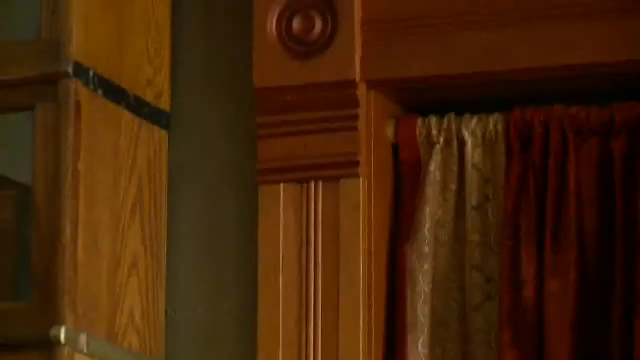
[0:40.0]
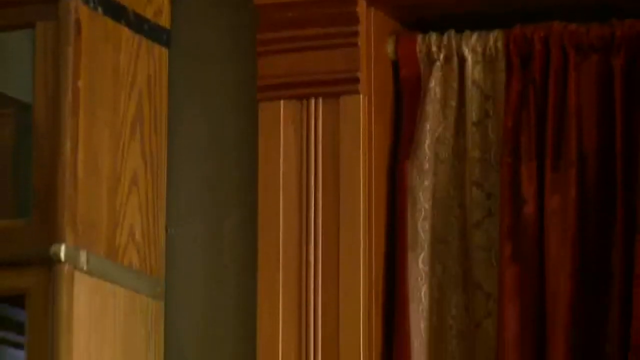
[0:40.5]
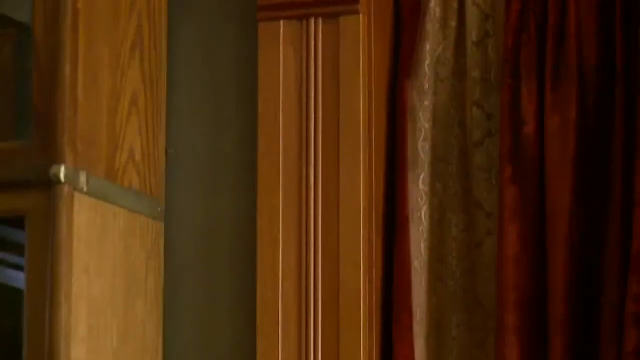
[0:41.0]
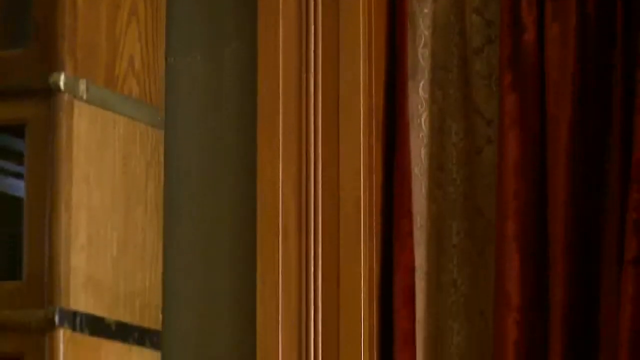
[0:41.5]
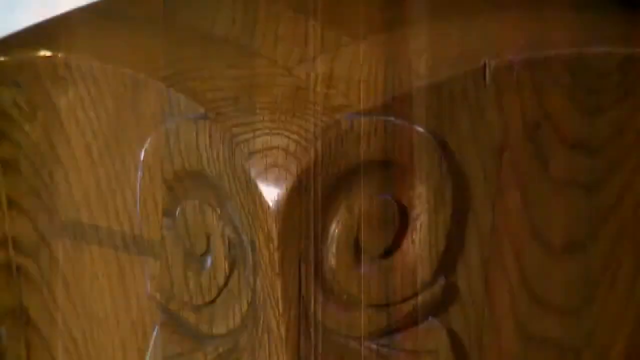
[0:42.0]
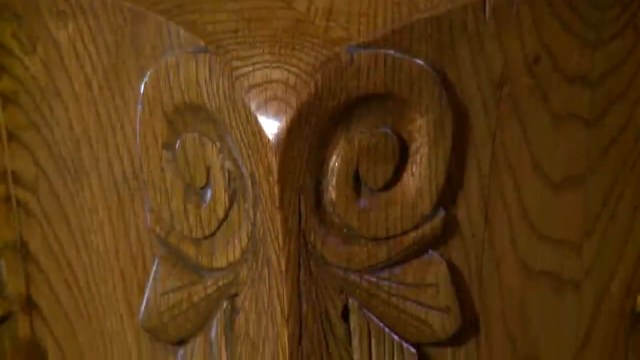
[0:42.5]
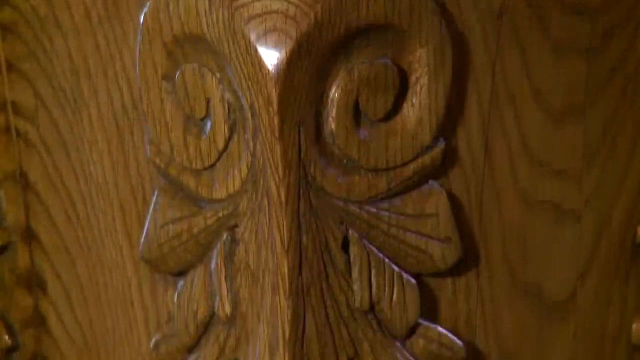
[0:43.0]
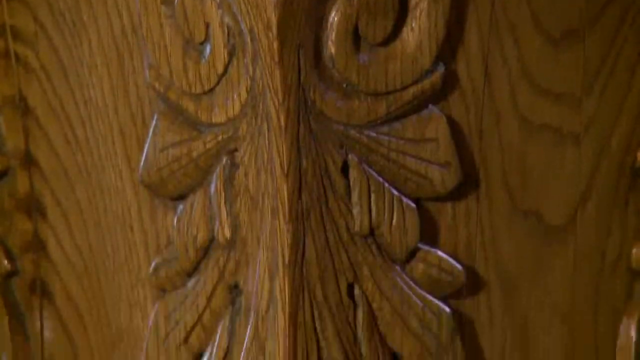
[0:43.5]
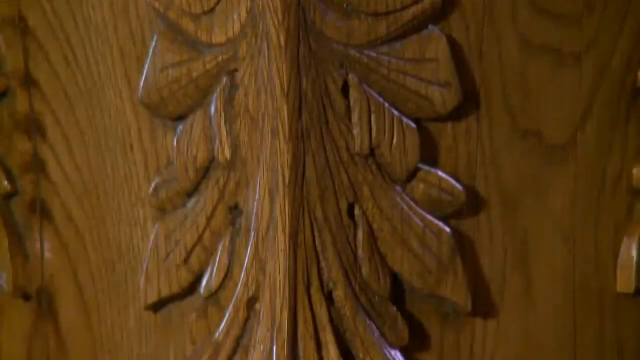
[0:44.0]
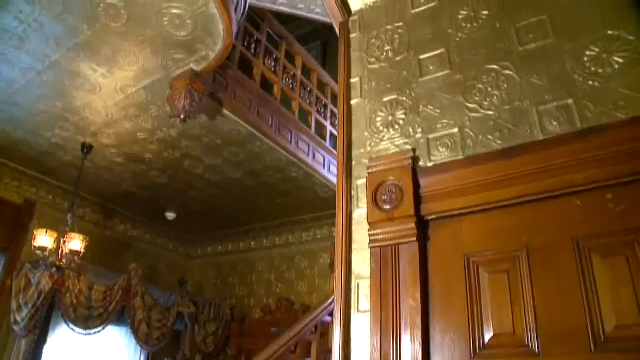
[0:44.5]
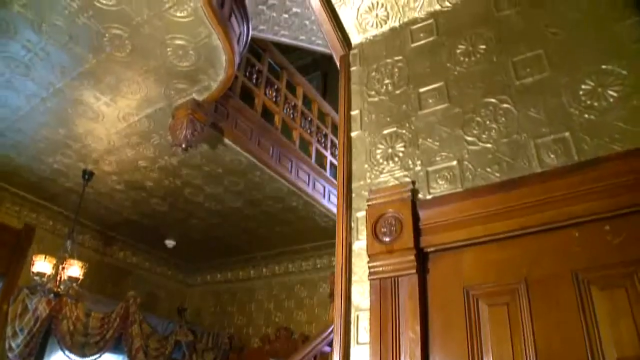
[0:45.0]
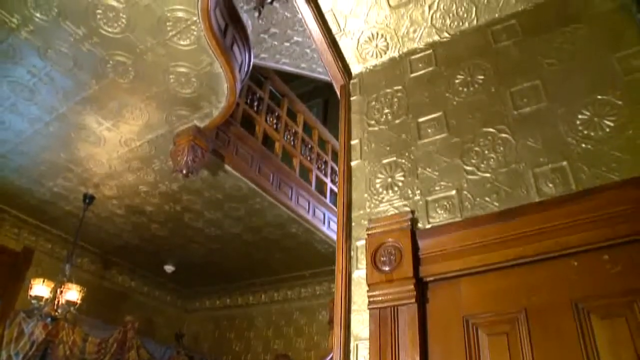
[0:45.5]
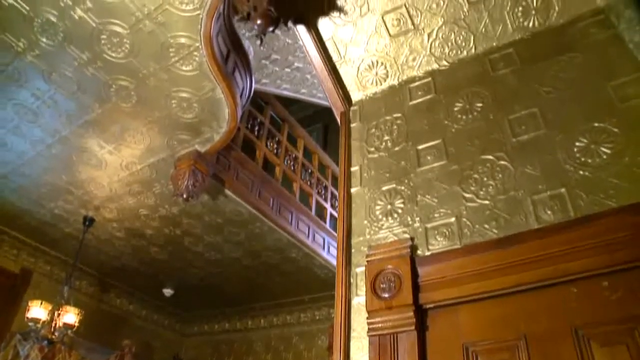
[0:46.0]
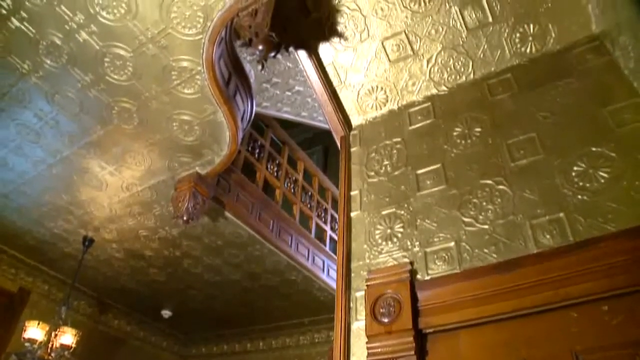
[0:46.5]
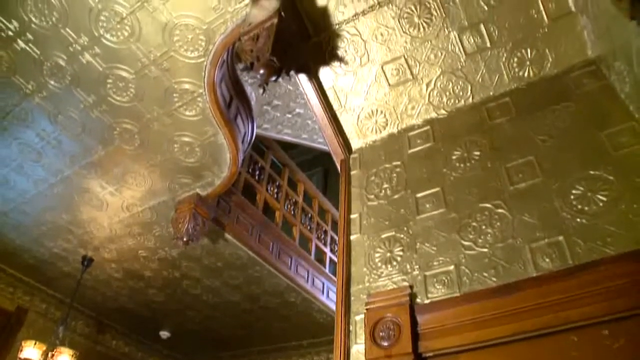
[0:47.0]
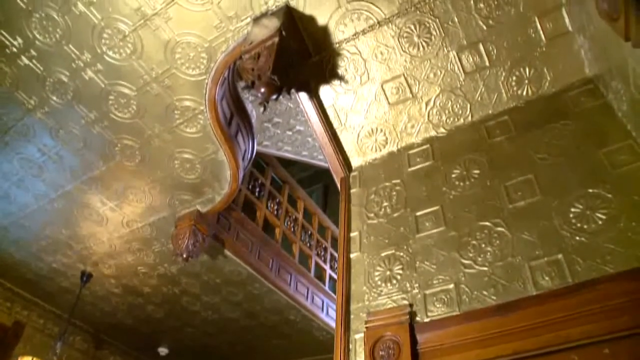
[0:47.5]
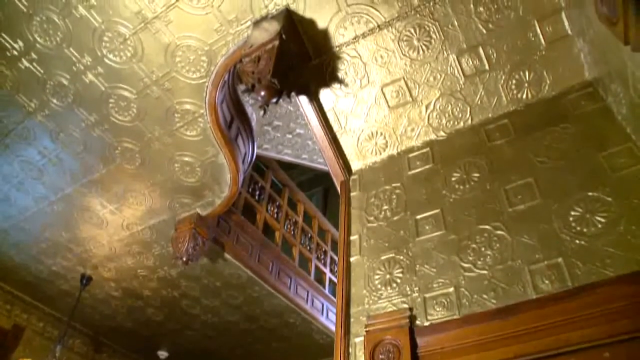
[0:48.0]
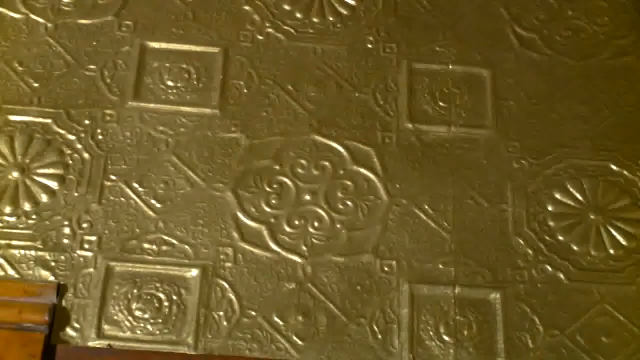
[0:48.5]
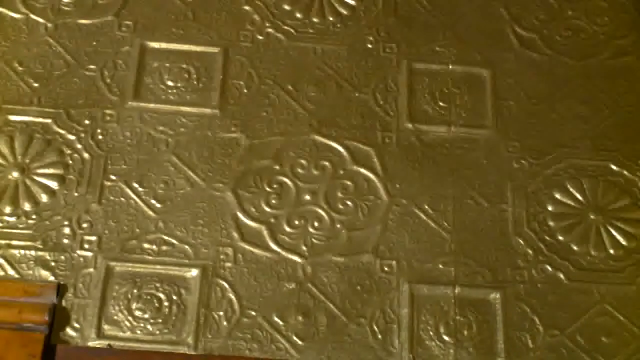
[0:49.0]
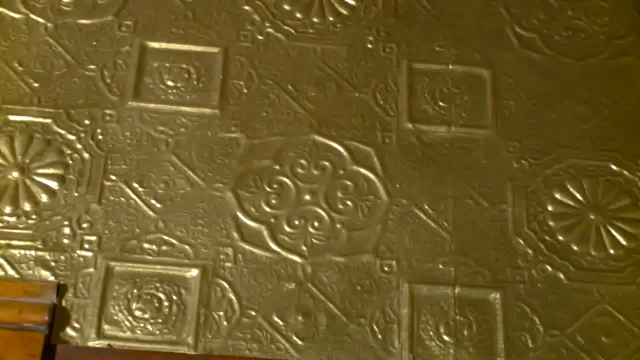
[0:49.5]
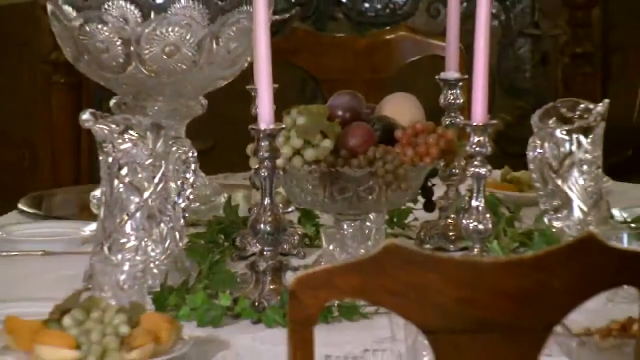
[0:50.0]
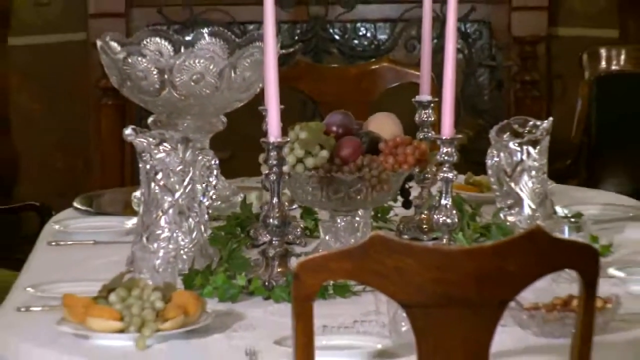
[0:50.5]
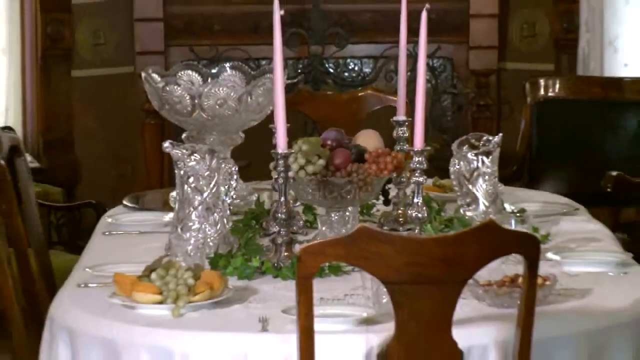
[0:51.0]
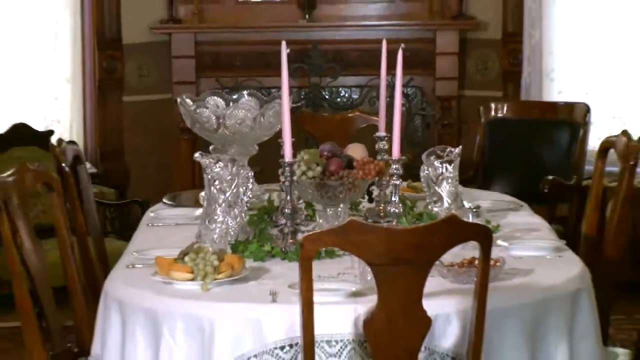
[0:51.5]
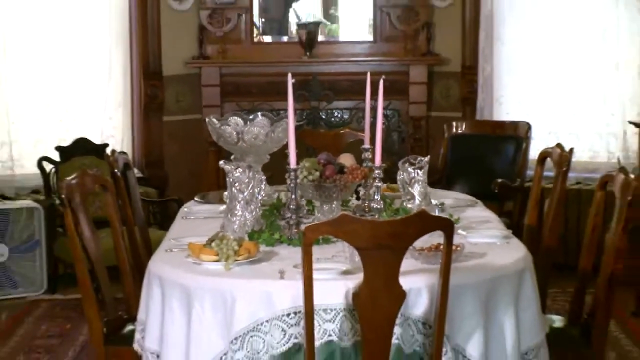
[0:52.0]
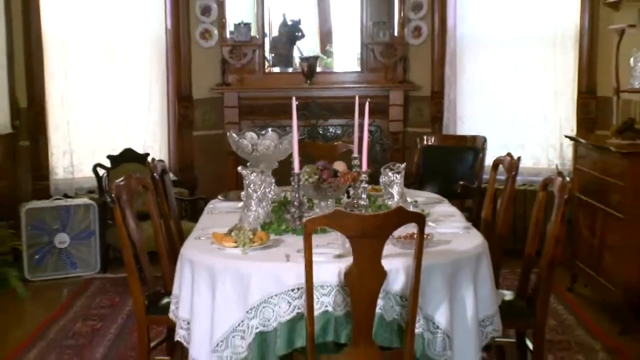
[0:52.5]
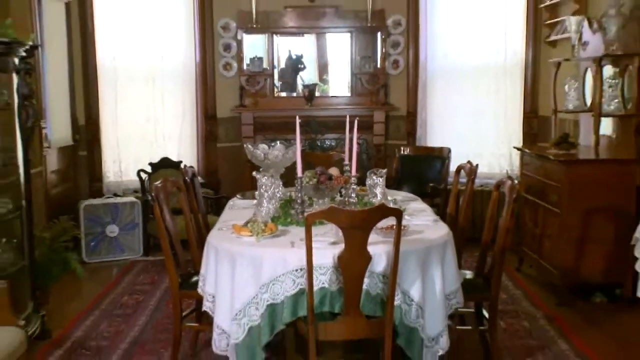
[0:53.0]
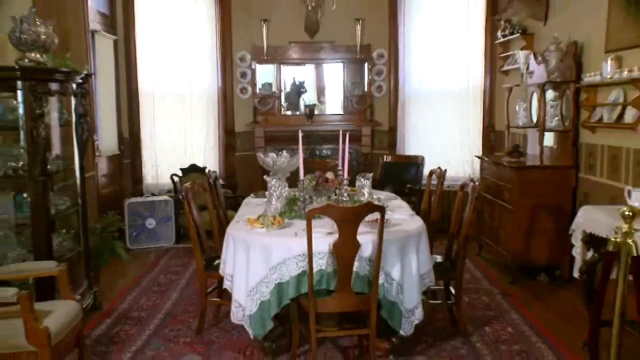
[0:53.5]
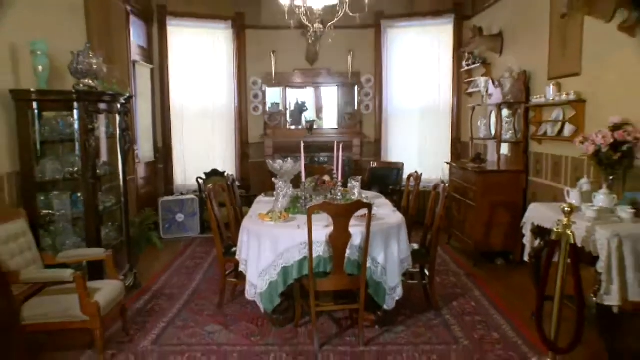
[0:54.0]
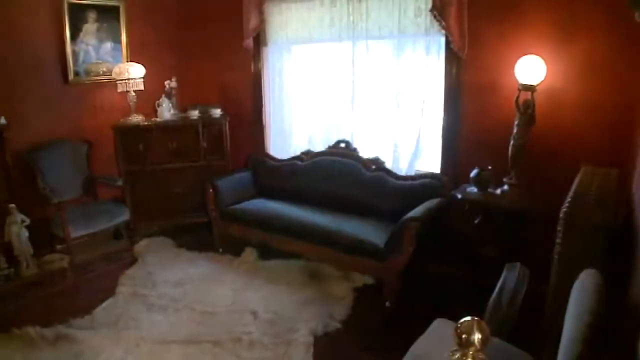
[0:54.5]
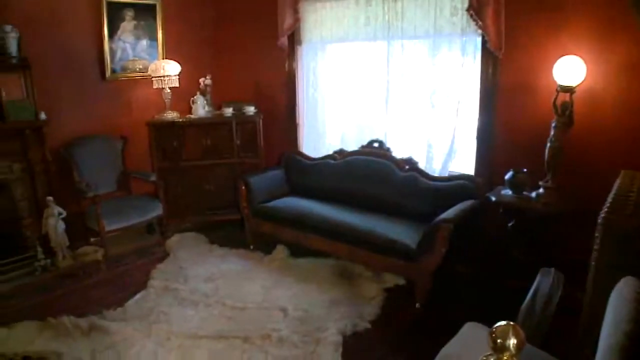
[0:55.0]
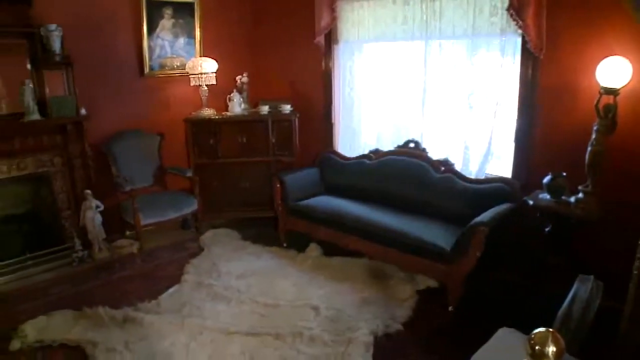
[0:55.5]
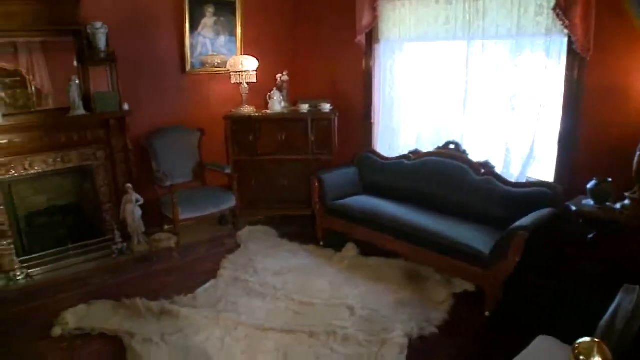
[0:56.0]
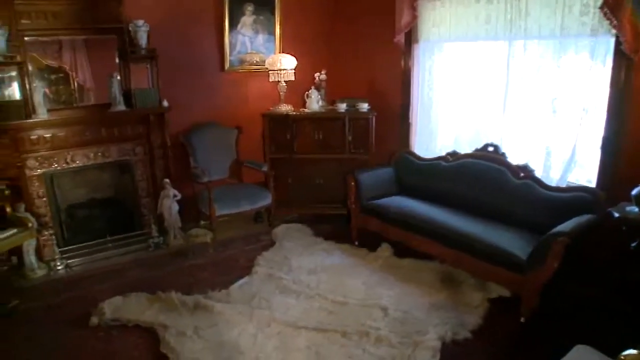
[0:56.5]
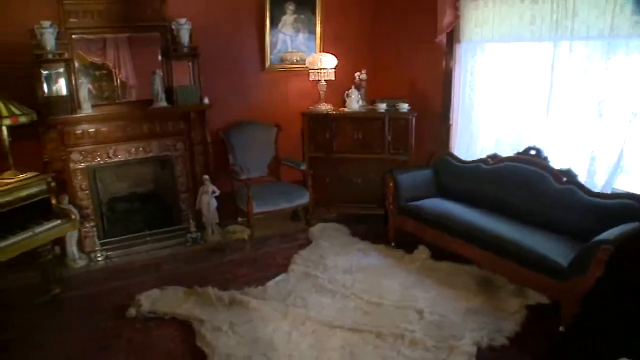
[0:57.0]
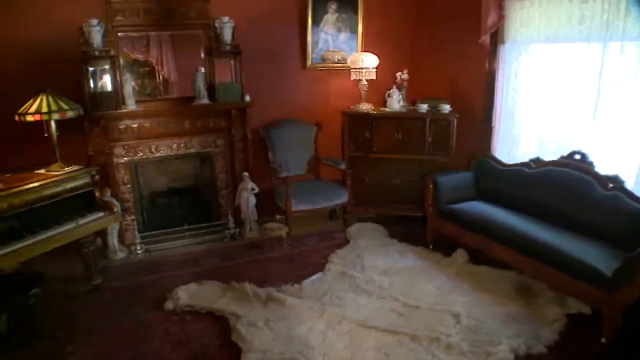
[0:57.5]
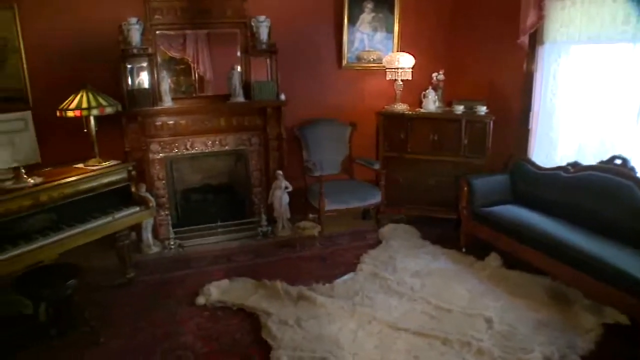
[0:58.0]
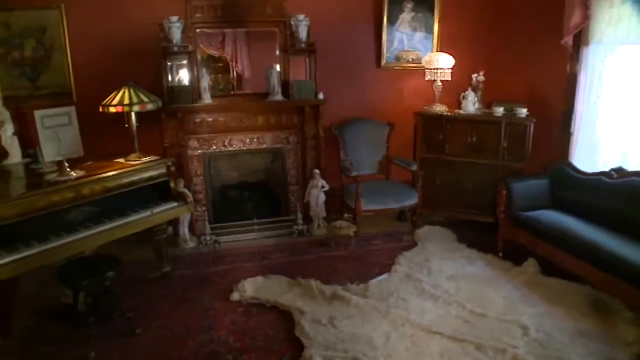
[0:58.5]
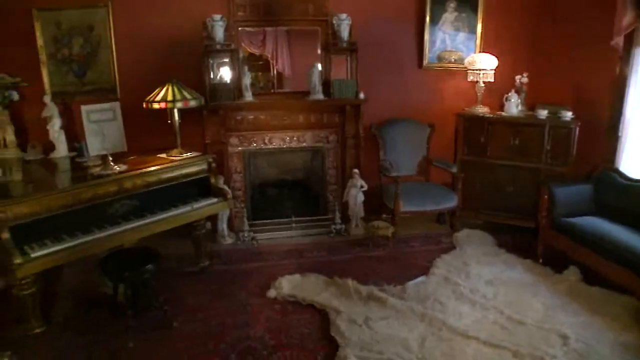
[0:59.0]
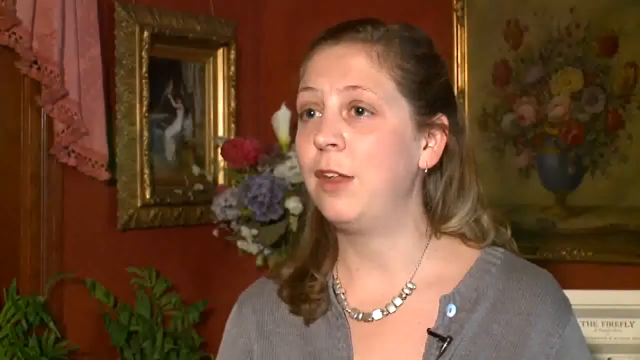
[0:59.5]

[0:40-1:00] The home has a decorative tin roof. Crystal dishes and candles are on a dressed table. The room has a grand fireplace and stained glass lamps. The home also has Victorian-type furniture from that era, a grand piano, ornate lighting, and decorative colors throughout.